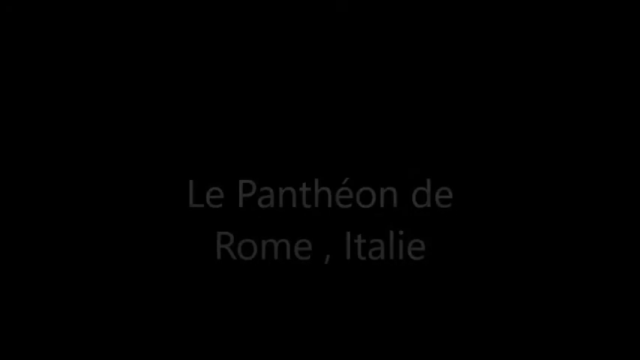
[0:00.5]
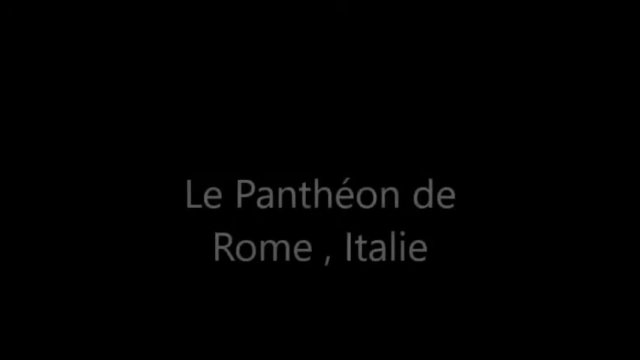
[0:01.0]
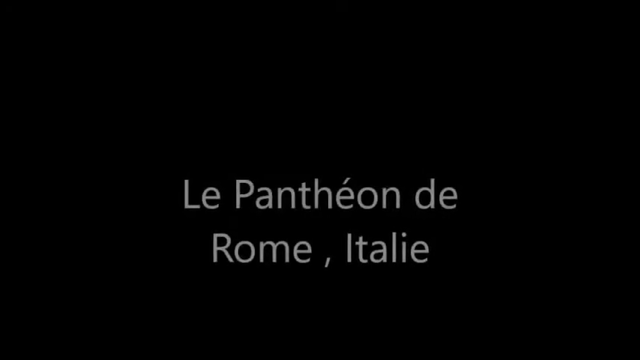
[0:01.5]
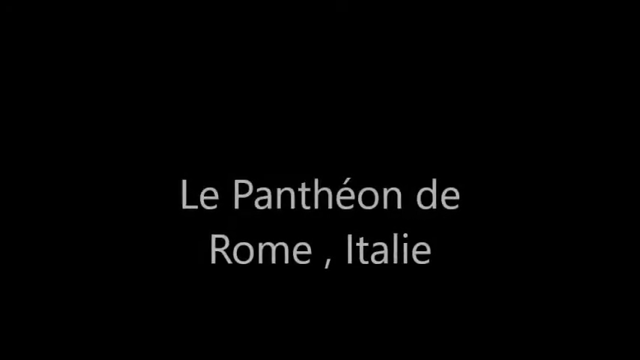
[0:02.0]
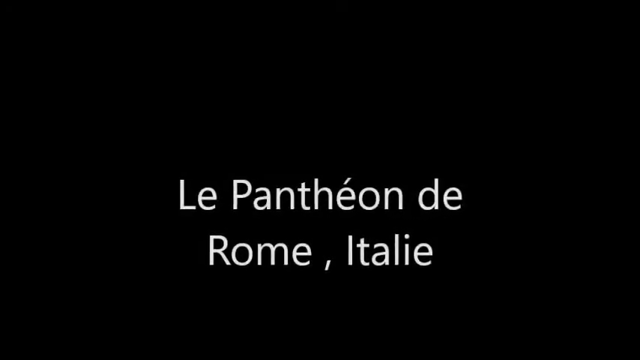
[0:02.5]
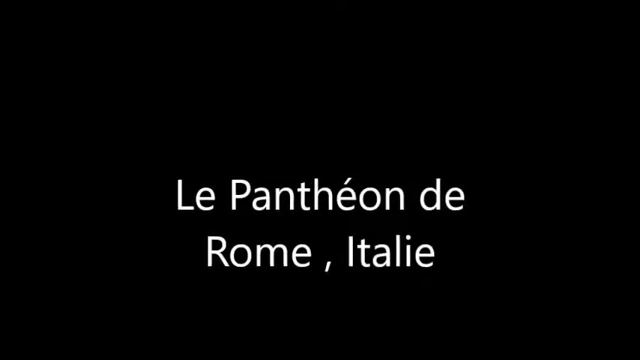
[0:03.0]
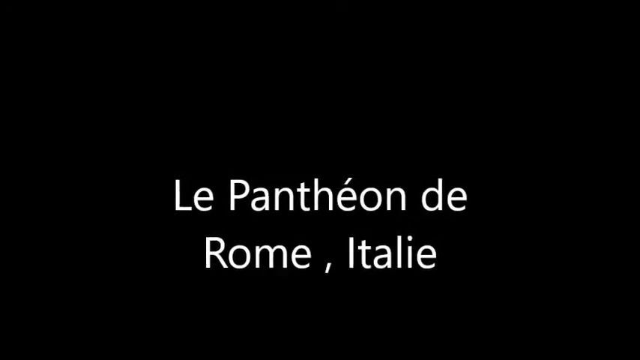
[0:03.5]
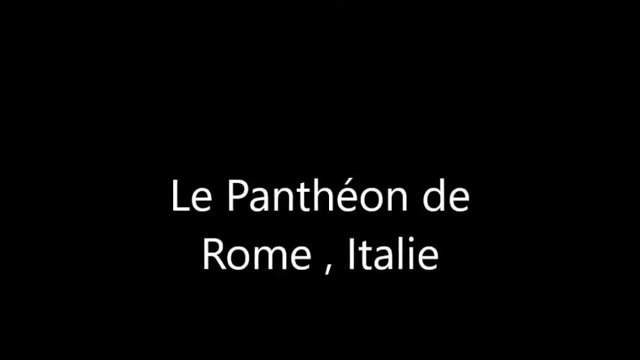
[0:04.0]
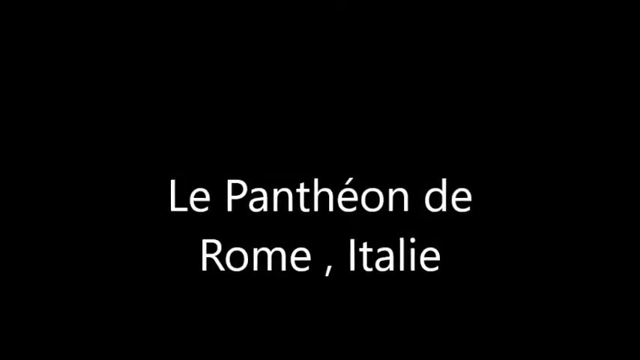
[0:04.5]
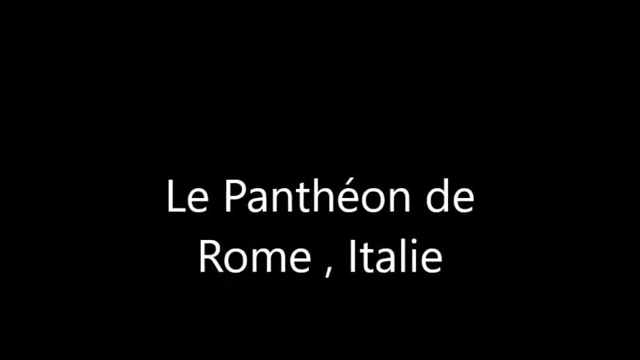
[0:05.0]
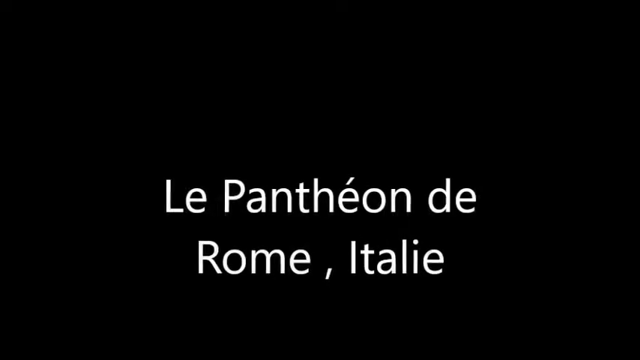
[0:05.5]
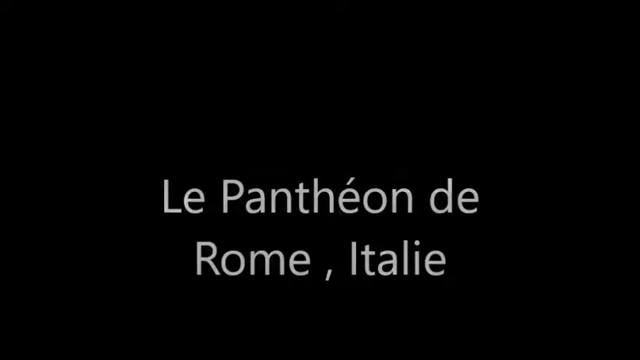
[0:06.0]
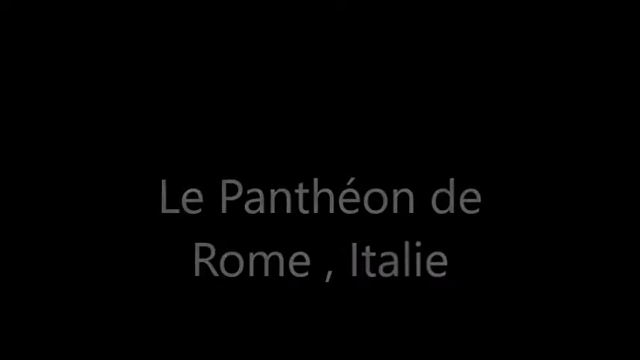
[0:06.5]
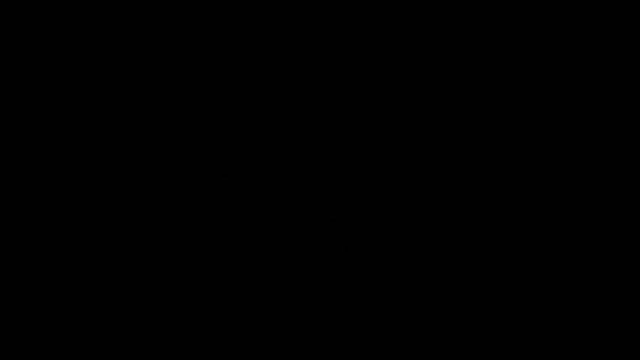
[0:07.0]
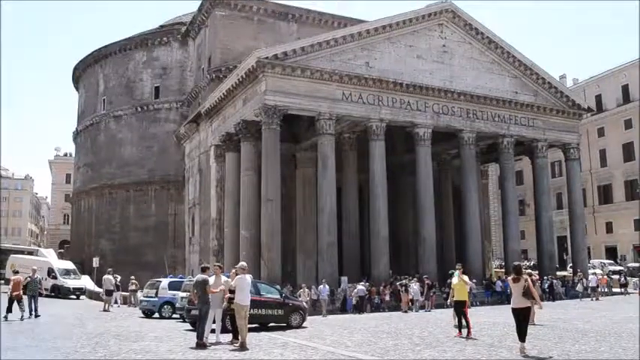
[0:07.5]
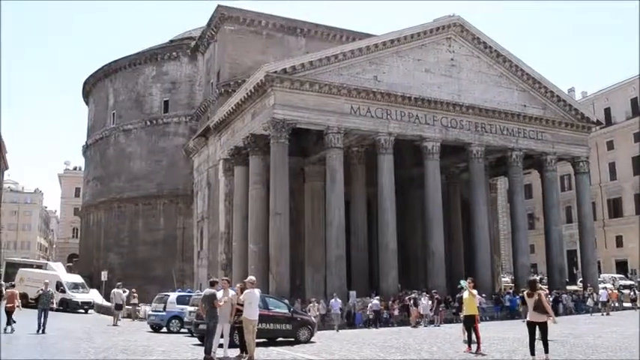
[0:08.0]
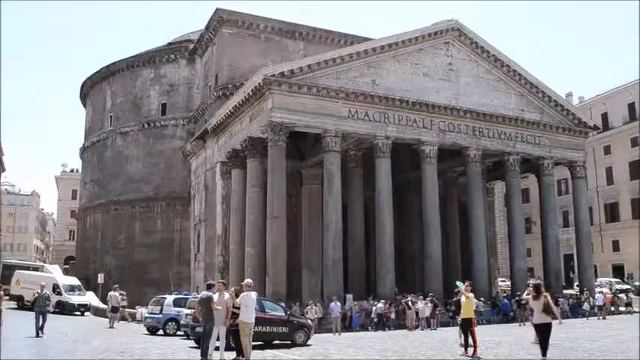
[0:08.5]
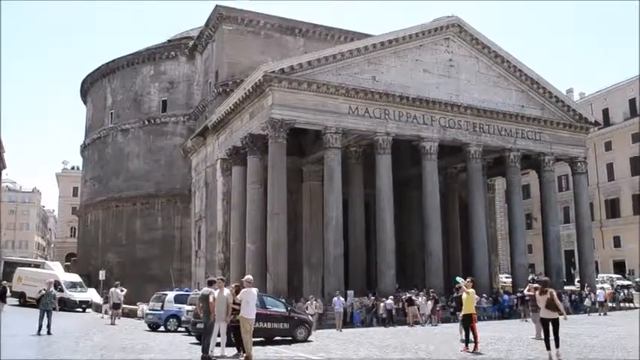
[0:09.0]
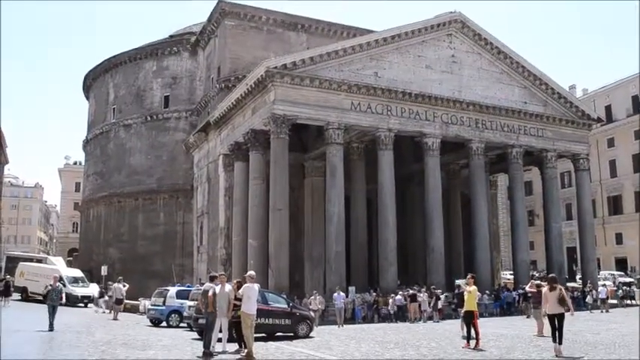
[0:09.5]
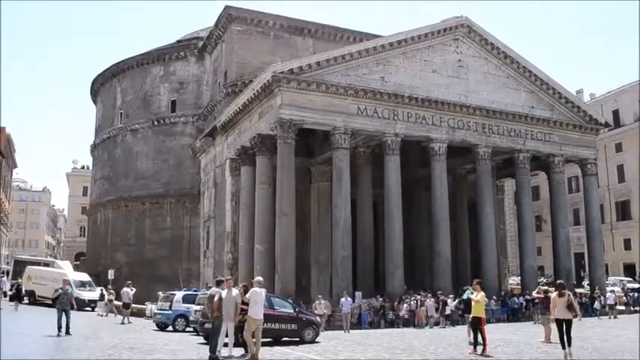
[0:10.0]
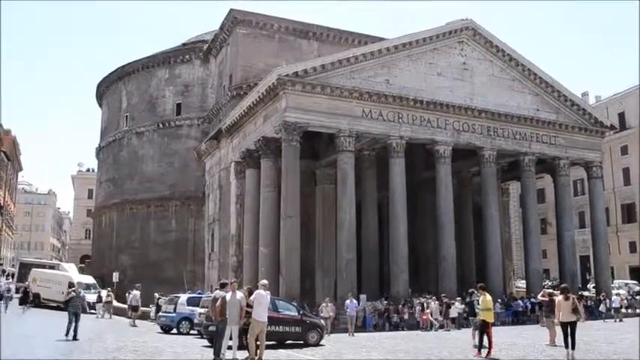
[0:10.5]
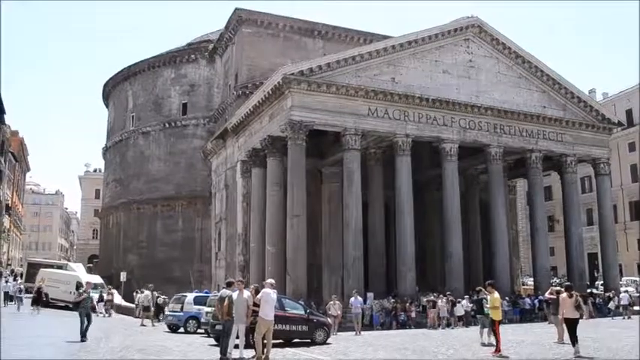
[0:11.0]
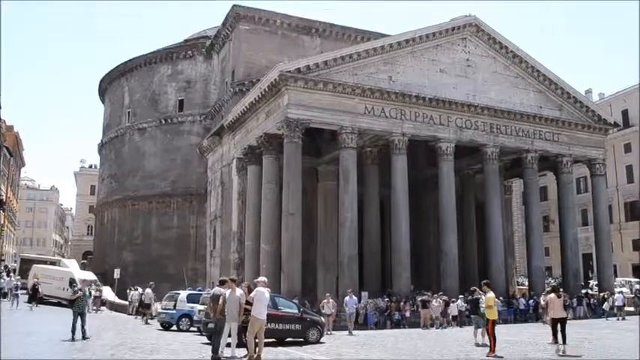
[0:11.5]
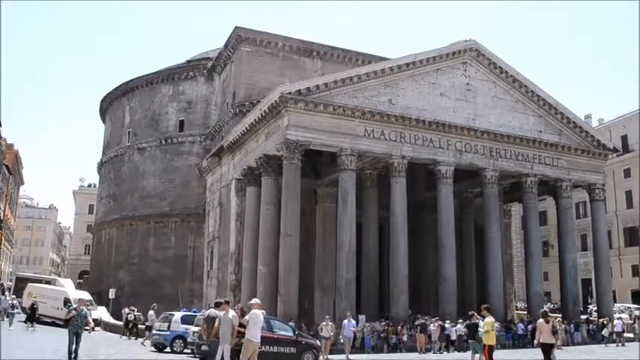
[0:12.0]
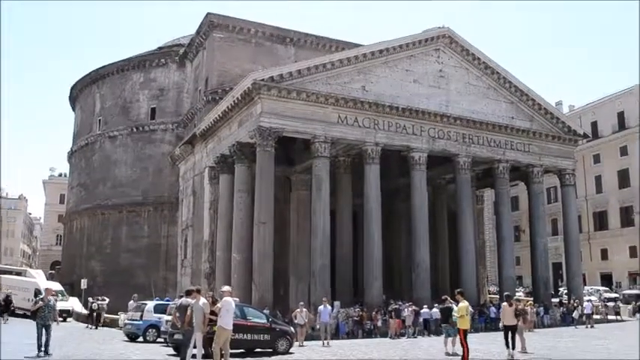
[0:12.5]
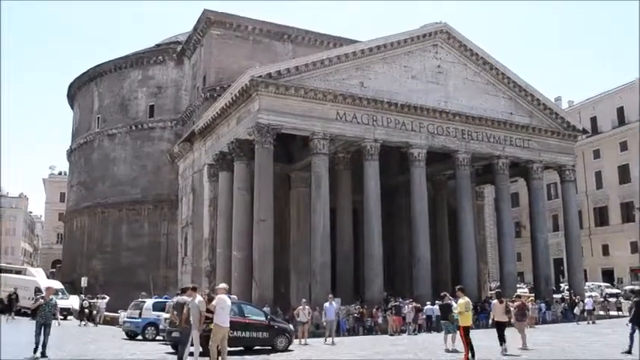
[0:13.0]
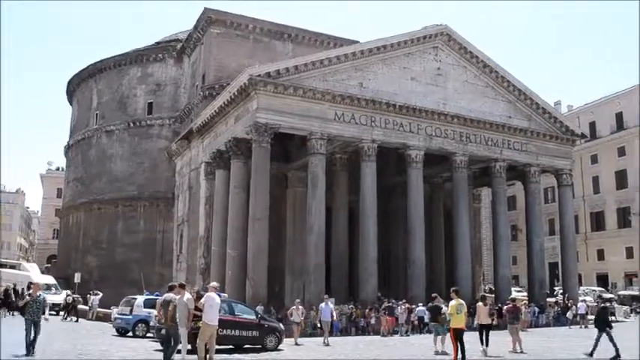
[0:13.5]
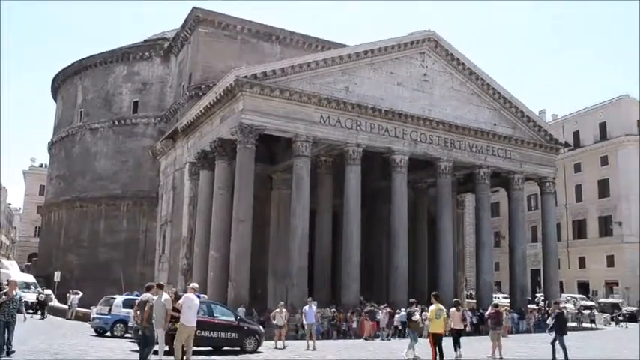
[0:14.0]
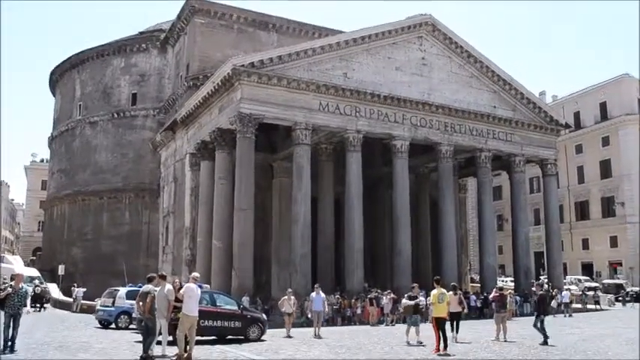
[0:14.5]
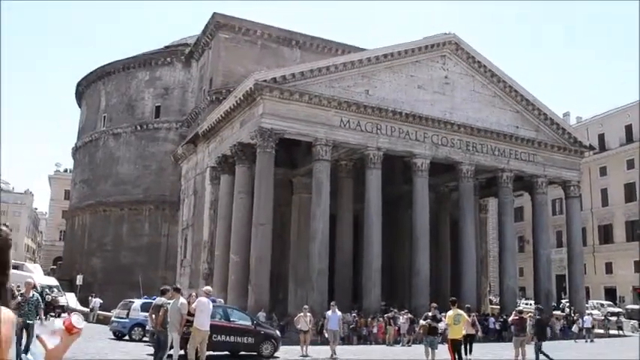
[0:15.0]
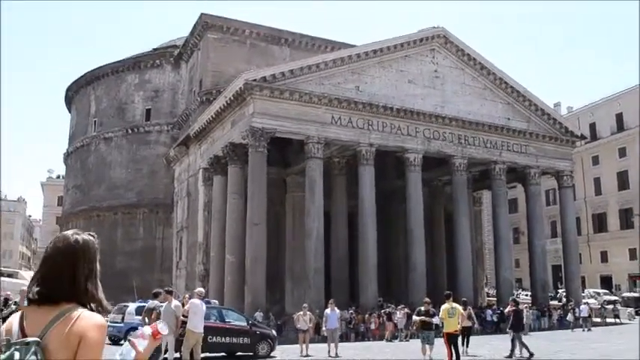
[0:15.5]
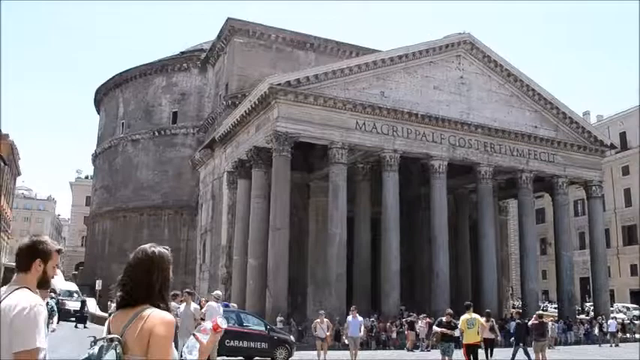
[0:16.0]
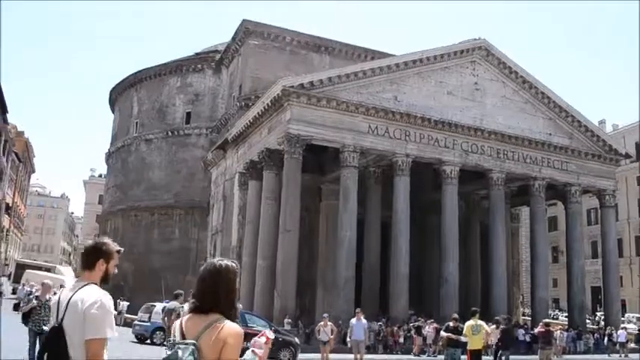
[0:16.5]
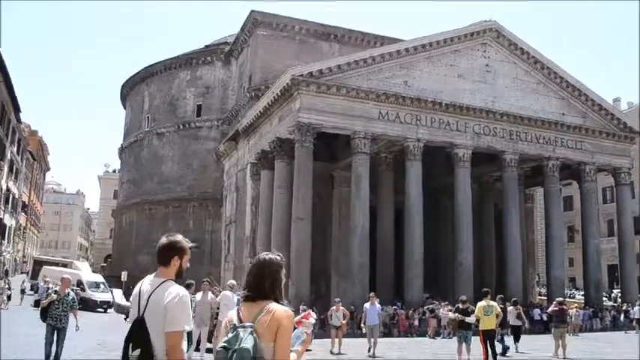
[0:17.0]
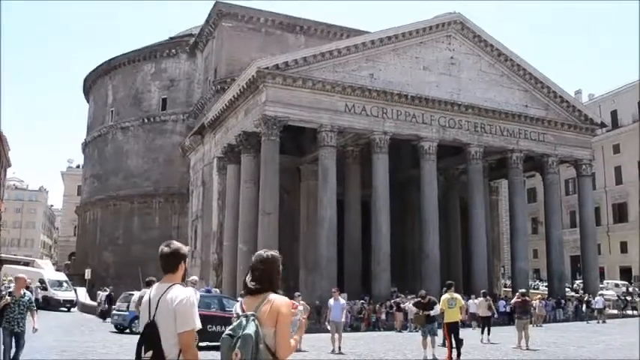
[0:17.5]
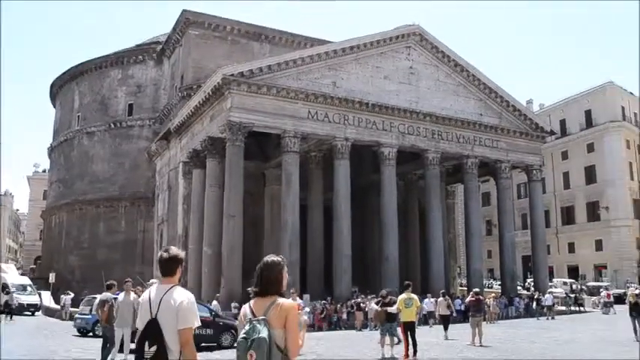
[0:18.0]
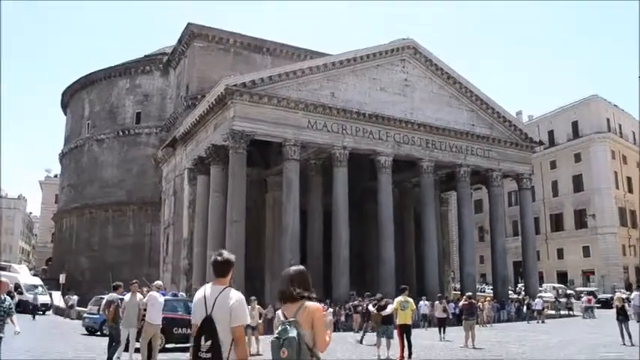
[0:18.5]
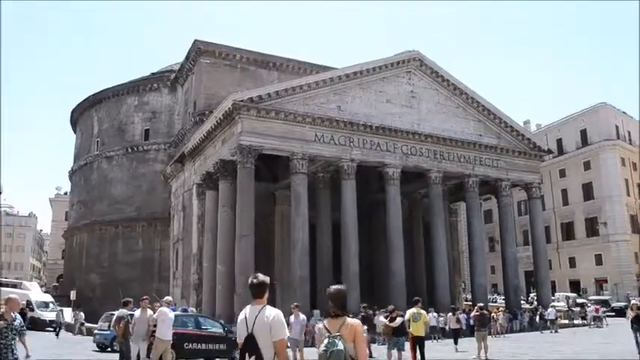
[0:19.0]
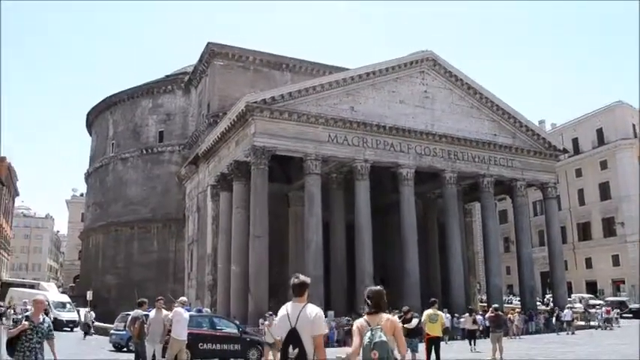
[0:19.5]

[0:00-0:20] A black screen with white text in French describes the city of Rome, Italy. Next comes footage of a large gray building with pillars in the front and a lot of people standing around. There are some vehicles on the road at the very bottom of the screen. The building appears to be very old and has its name engraved on it. At the very top of its front surface is a triangular-shaped roof. The sky above is light blue, and the camera captures the building and its surroundings, including a couple of other older buildings nearby. Some people walk by as the camera captures the environment around the building.